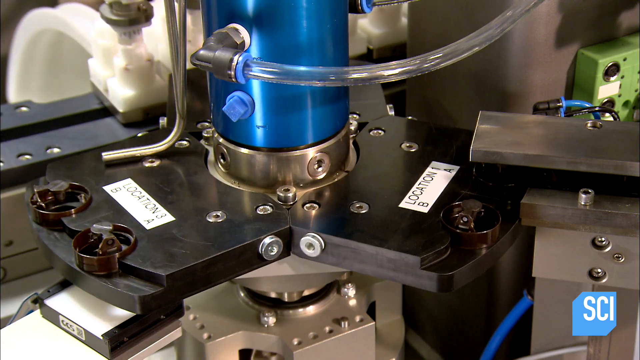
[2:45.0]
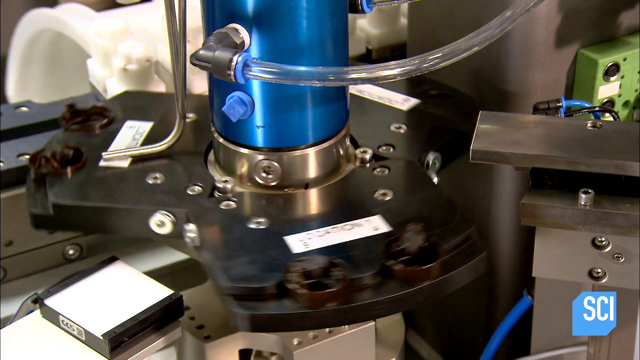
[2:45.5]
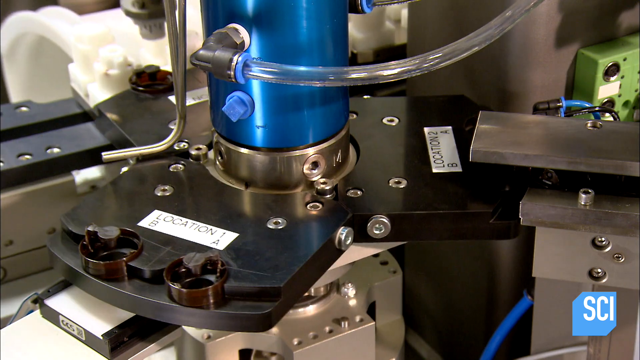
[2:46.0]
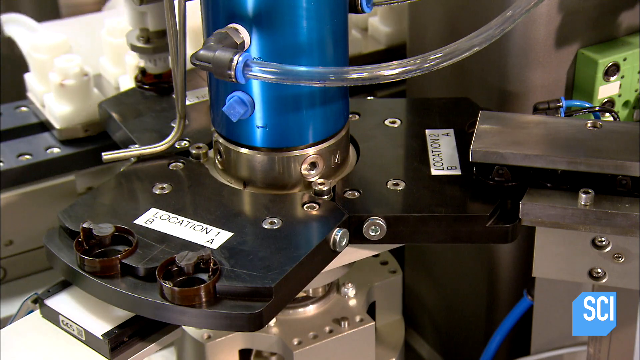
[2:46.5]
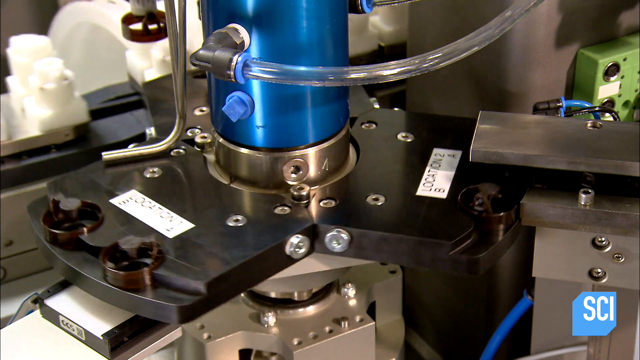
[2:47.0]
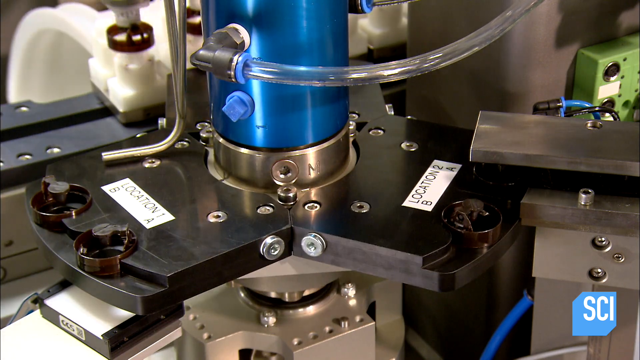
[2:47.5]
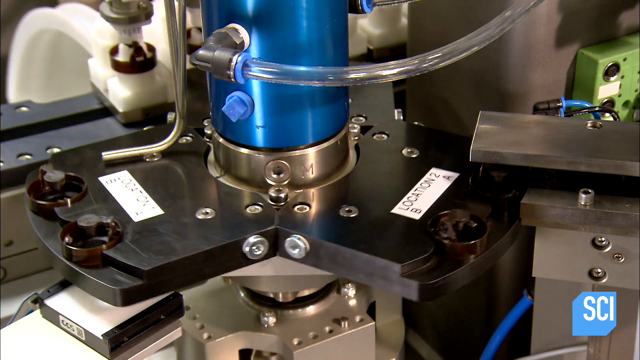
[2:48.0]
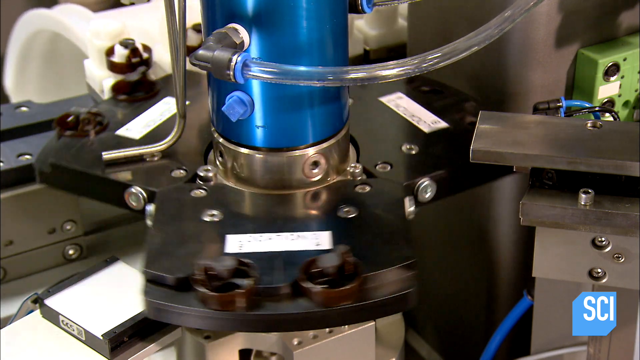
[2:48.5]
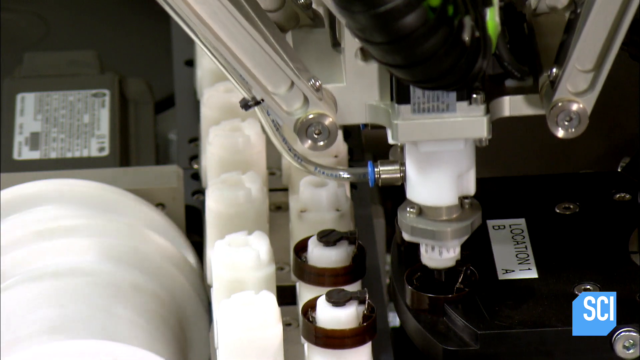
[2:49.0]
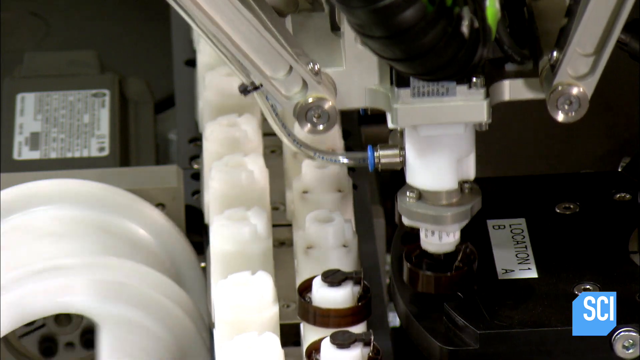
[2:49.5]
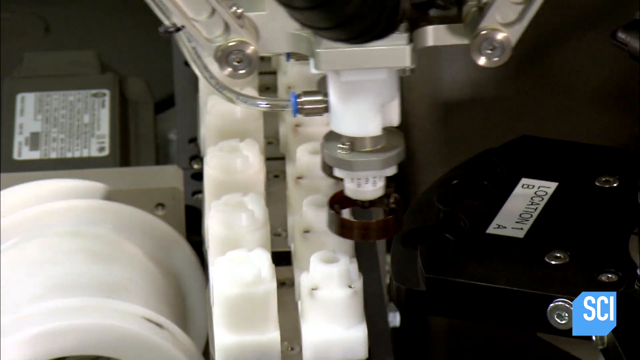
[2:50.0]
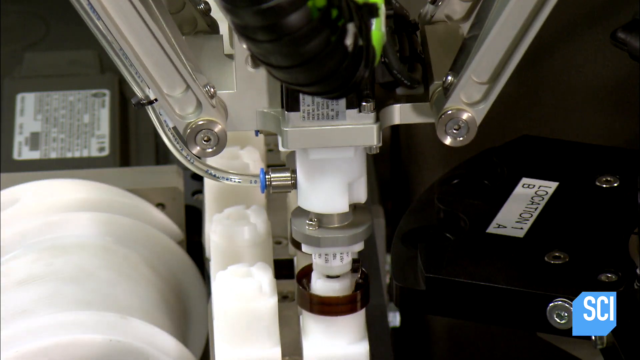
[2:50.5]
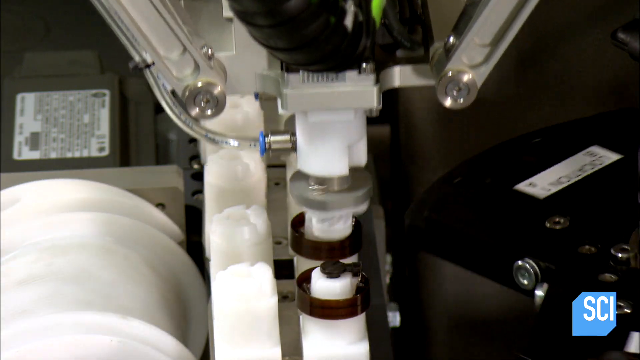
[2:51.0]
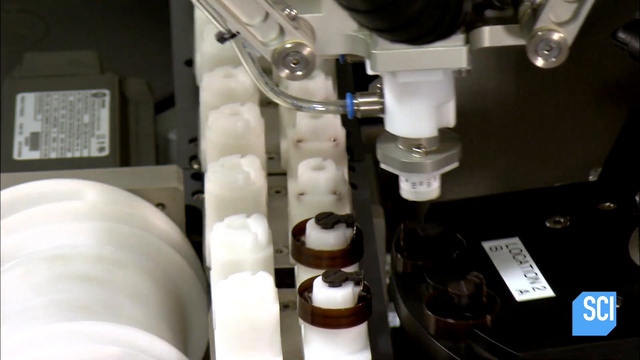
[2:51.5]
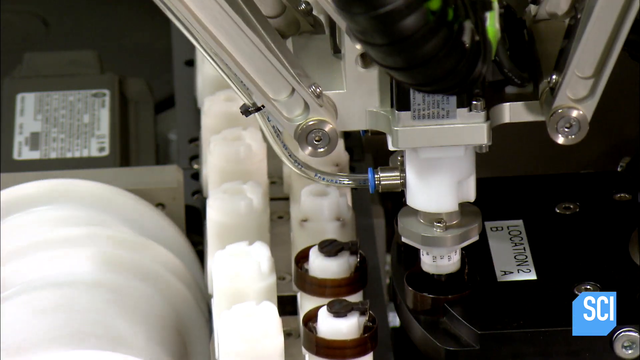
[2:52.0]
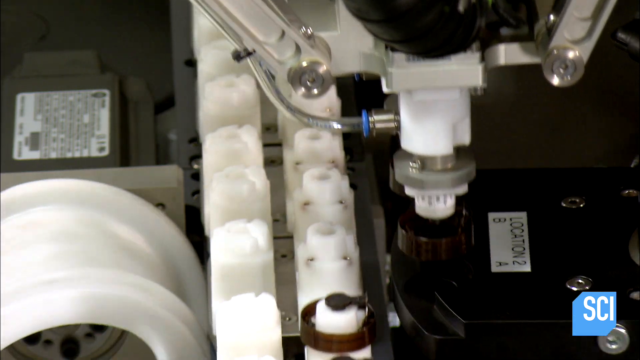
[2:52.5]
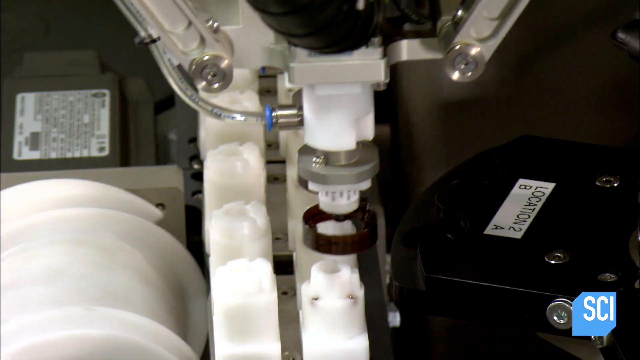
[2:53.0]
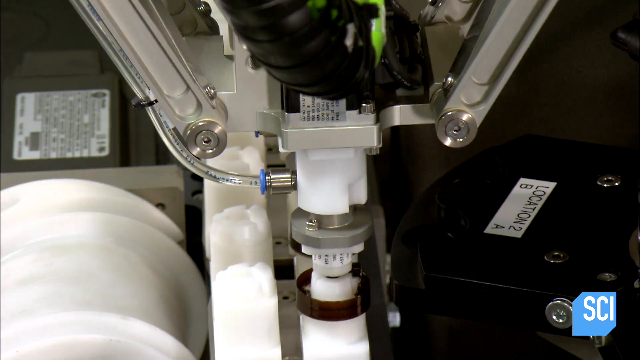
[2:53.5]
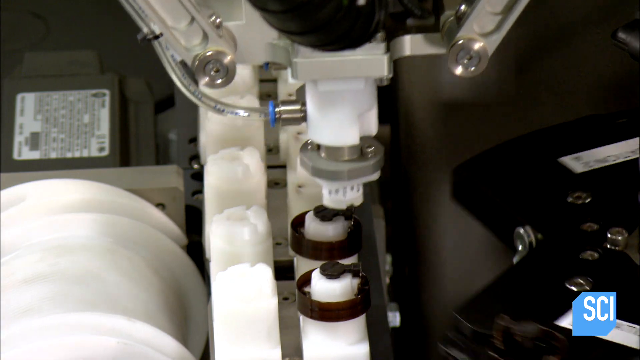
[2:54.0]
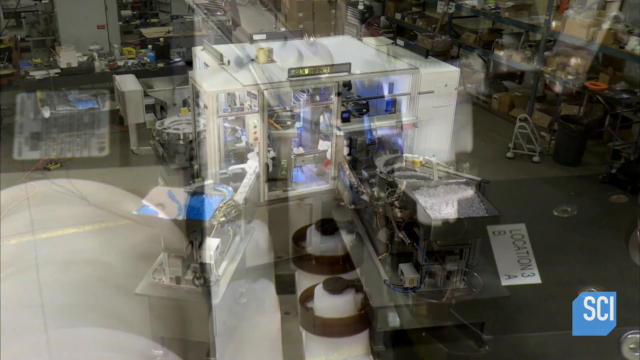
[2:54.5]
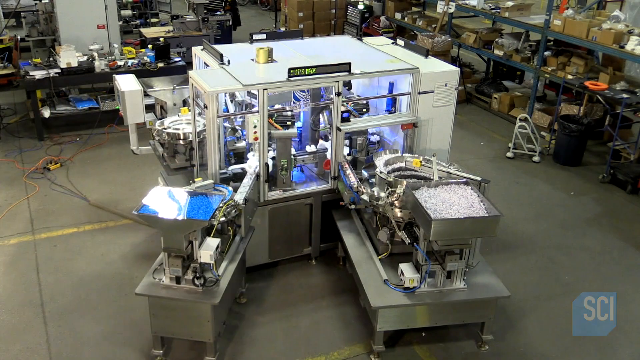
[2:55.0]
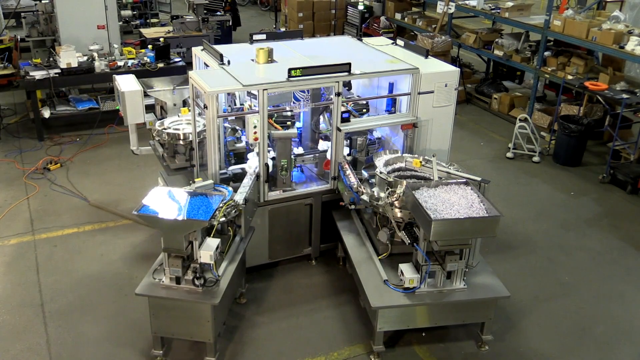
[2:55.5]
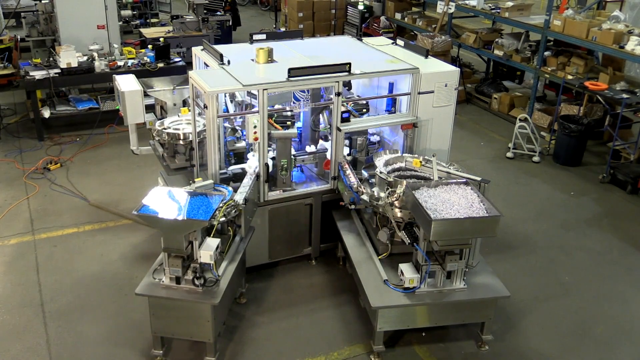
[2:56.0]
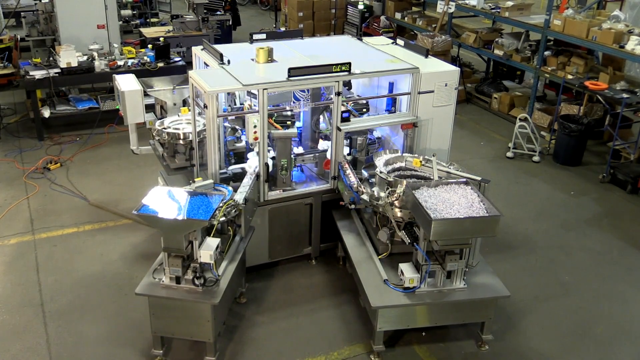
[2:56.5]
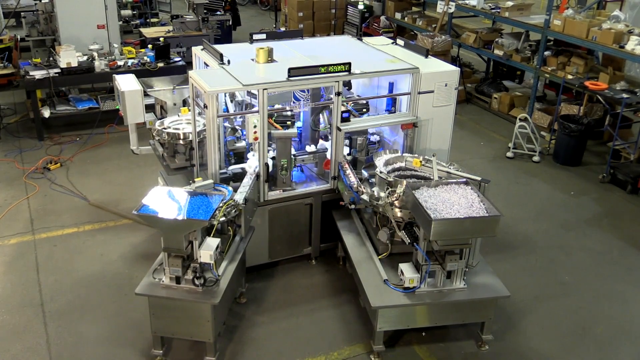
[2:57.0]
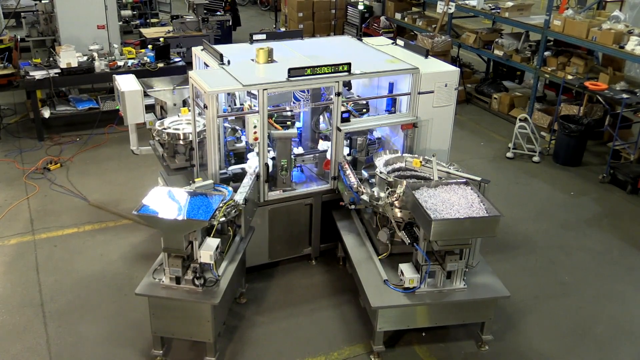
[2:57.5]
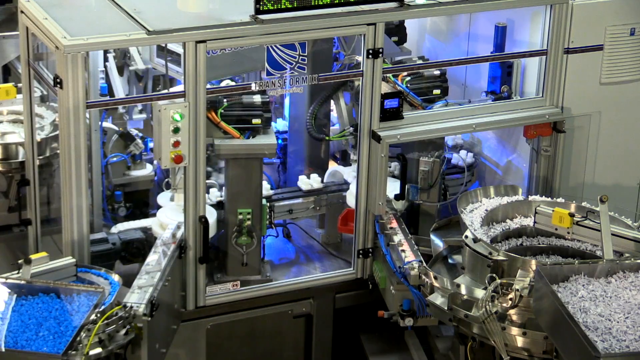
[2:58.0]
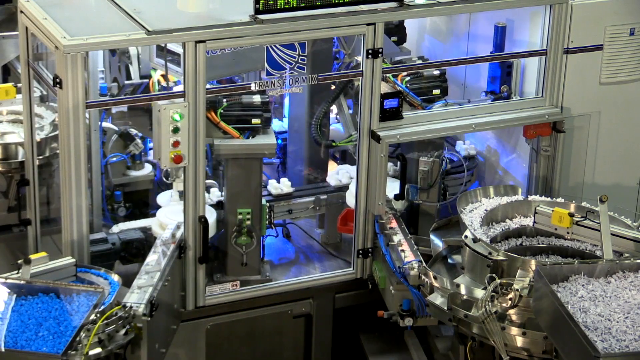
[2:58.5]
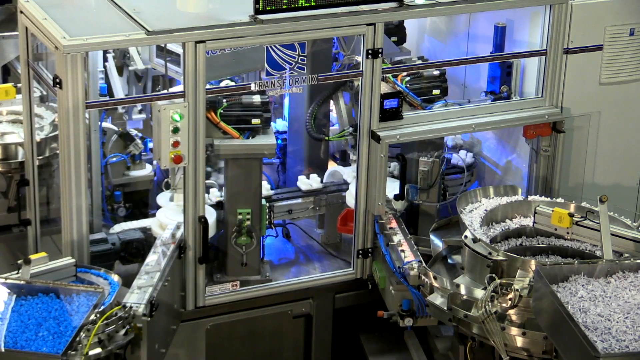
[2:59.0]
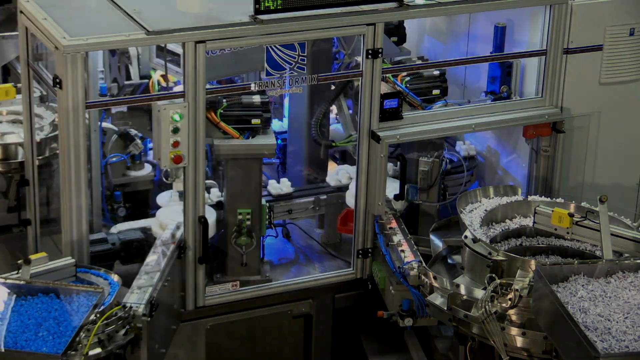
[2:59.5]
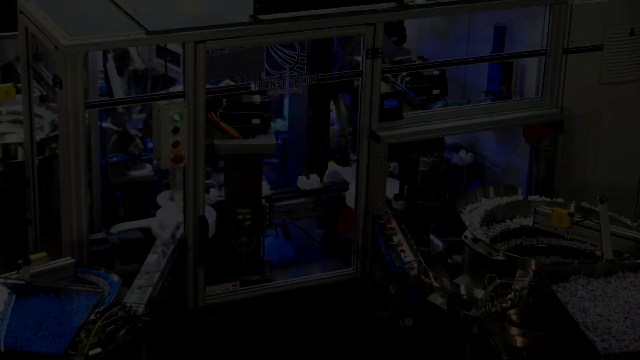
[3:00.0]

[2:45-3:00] Another machine looks sort of like a disc with three flares cut out of it, making a sort of triangle shape. The piece is flat and spins around, and it is connected to a blue cylinder, with clear tubes running along its side. The view switches to another machine that appears to be putting caps onto the pieces that another machine put on the belt earlier; the caps are apparently slightly burgundy colored. Then what looks like a machine inside a box with glass windows is shown inside a warehouse, followed by close-up views of more machines at work.